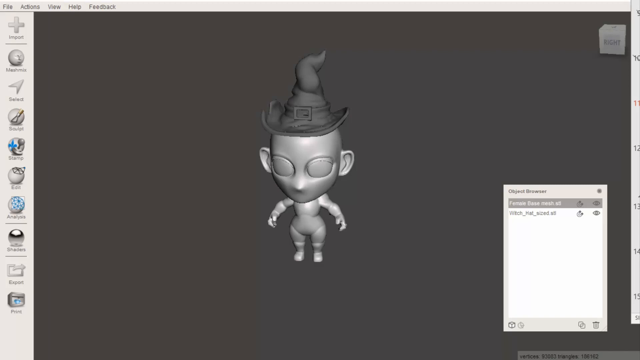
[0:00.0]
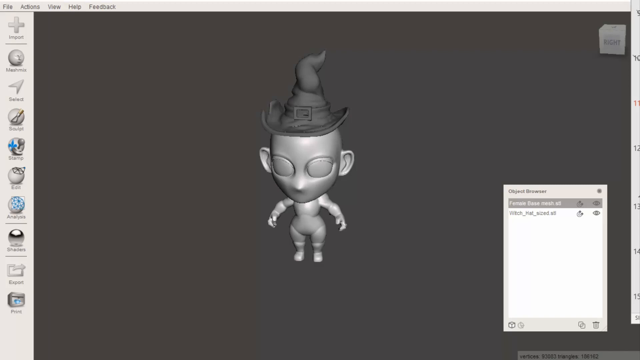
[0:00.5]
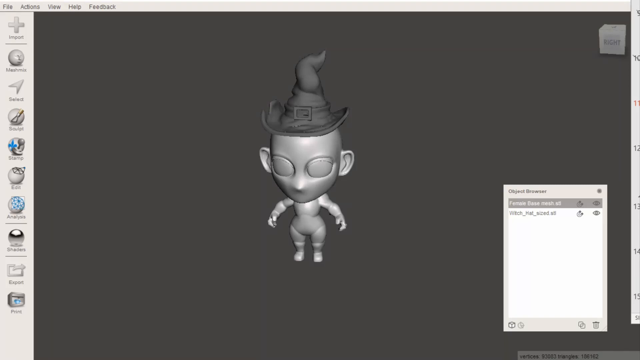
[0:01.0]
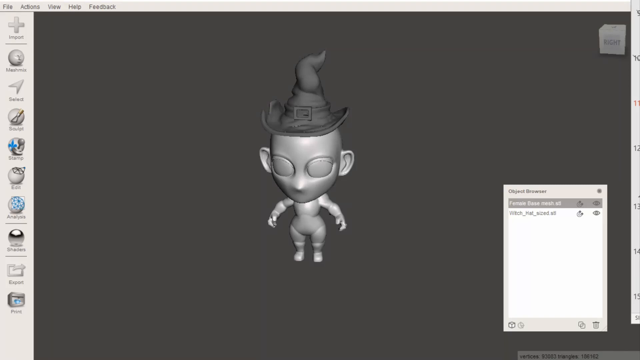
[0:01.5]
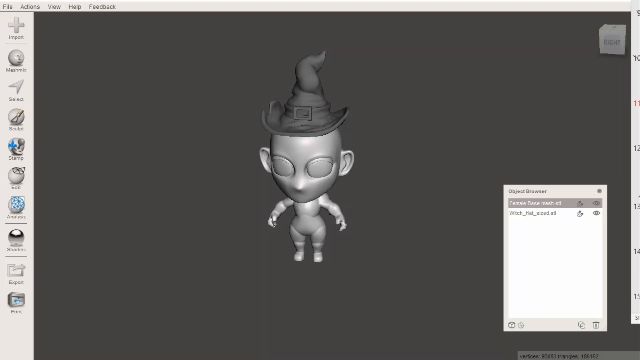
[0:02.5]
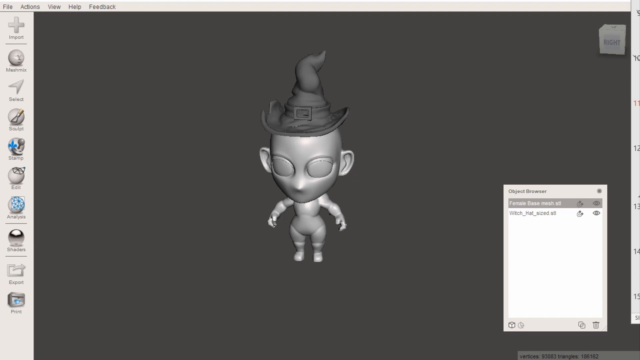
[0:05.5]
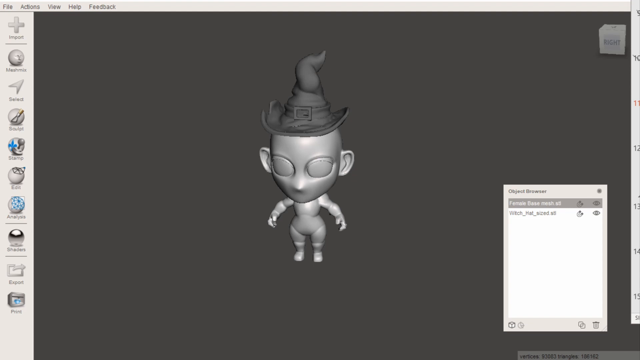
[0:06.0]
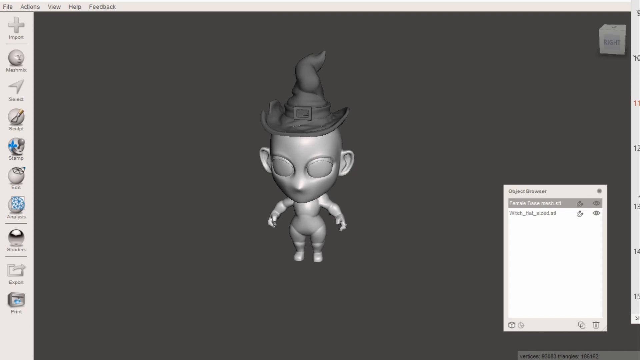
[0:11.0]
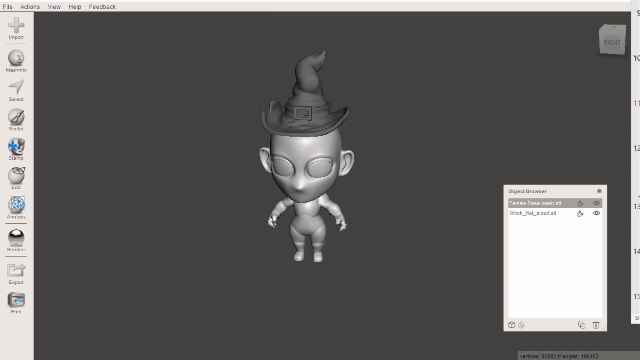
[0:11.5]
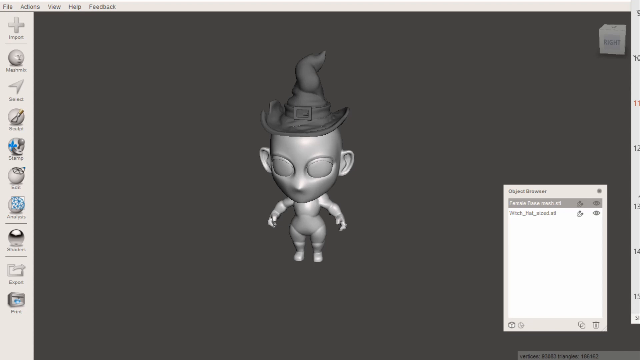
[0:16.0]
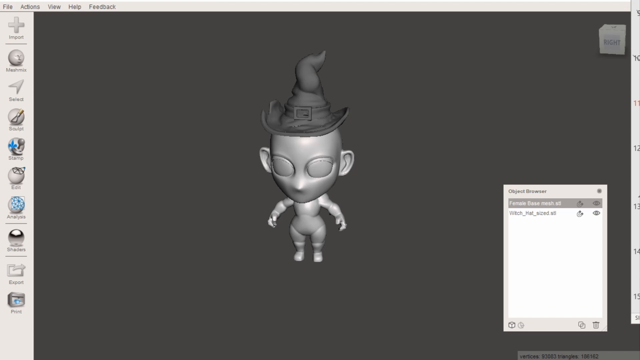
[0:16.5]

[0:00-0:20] A single static image shows what looks like a computer screen running a program for creating animated characters. A toolbar runs across the top, and another bar on the left side holds different features, with icons that can be clicked to run different functions. A text box is open on the screen, but its header is slightly blurry and the text in it is difficult to make out. The screen is gray and white, with no color. In the center is a little animated figure that looks very much like CGI animation. It looks like a baby with a very large head and has no distinct facial features, just large circles for eyes. On its head it wears what looks like a witch's hat, slightly curved at the top, with a big buckle on the front.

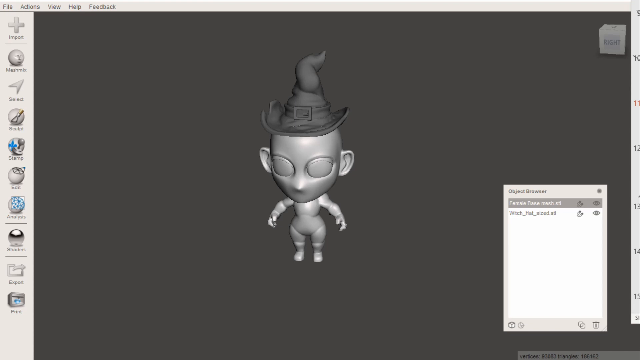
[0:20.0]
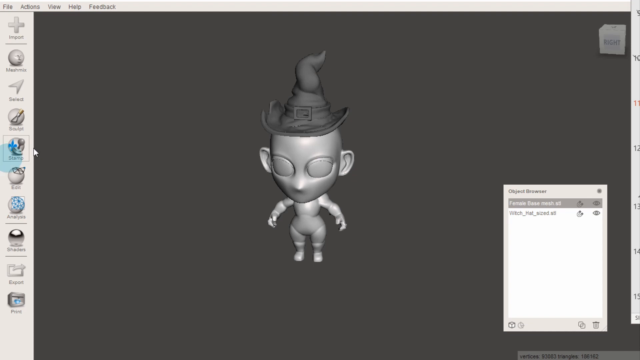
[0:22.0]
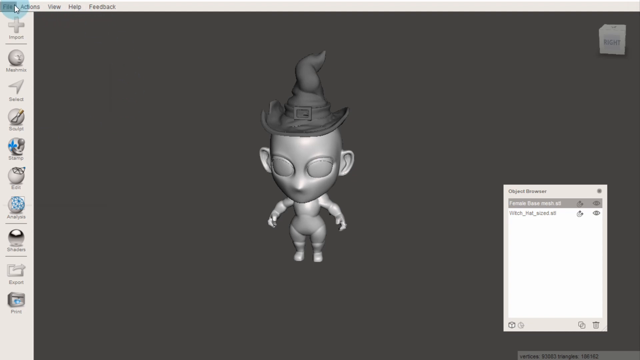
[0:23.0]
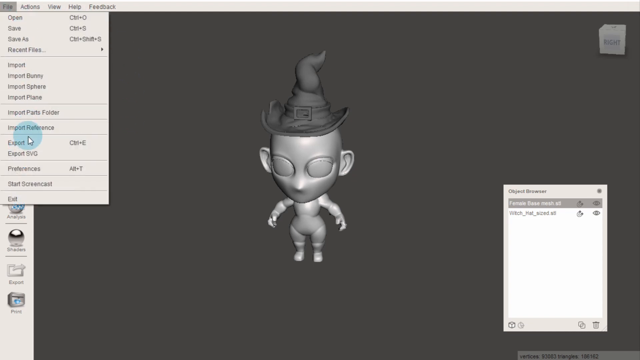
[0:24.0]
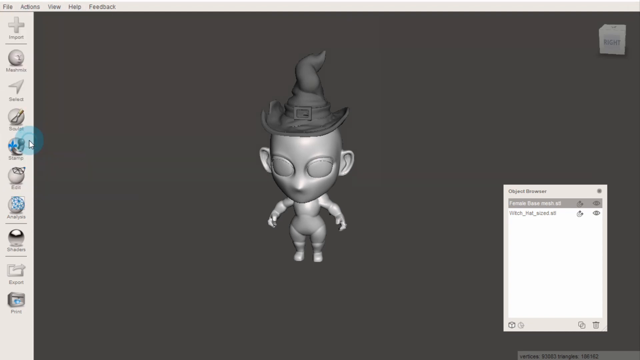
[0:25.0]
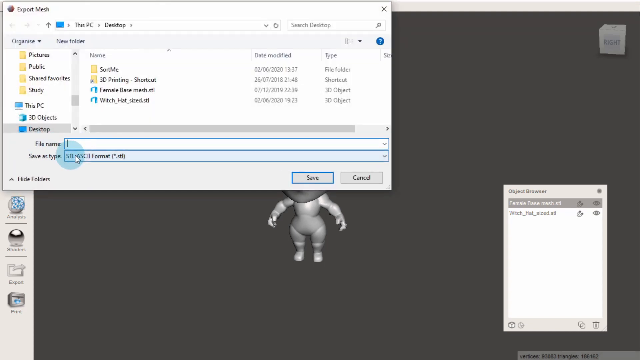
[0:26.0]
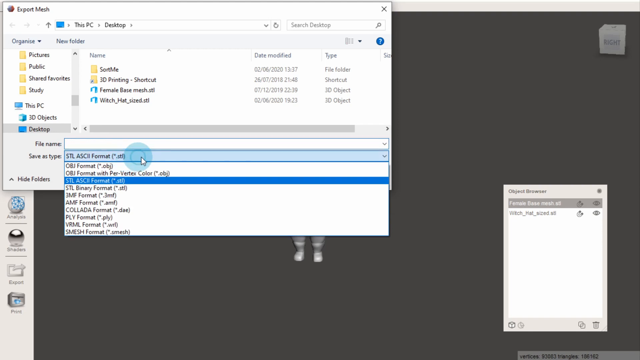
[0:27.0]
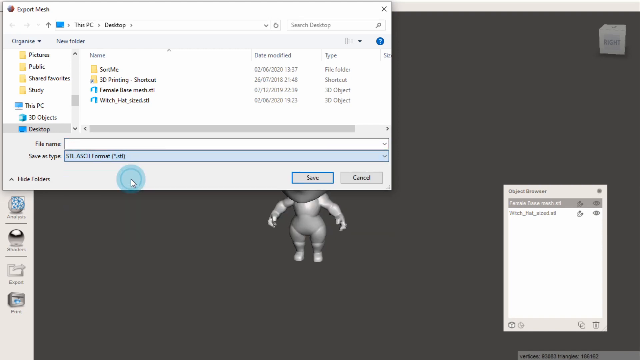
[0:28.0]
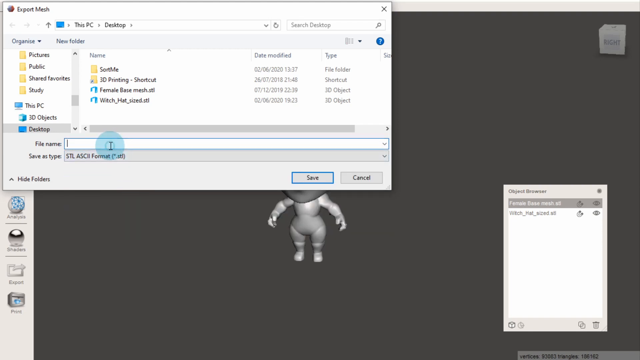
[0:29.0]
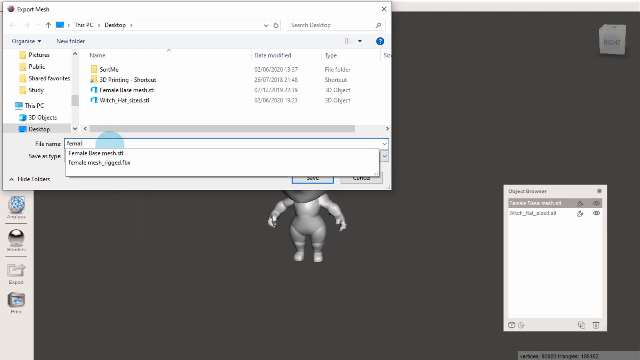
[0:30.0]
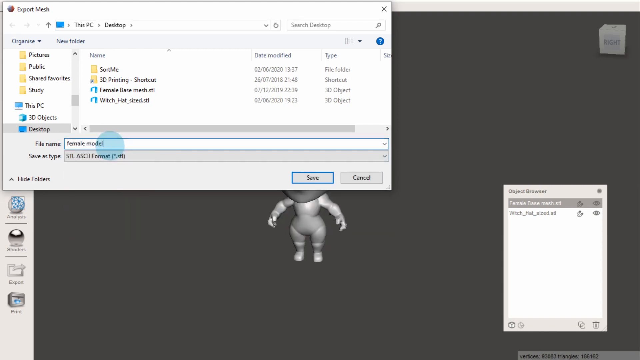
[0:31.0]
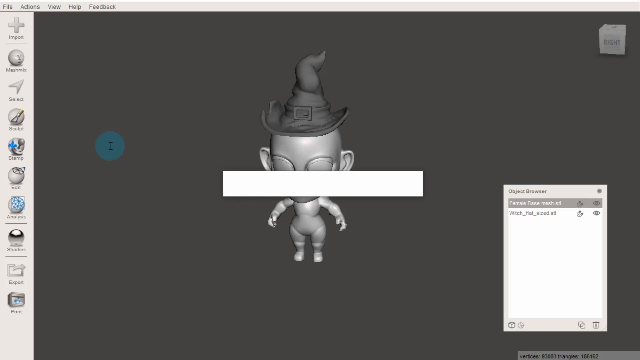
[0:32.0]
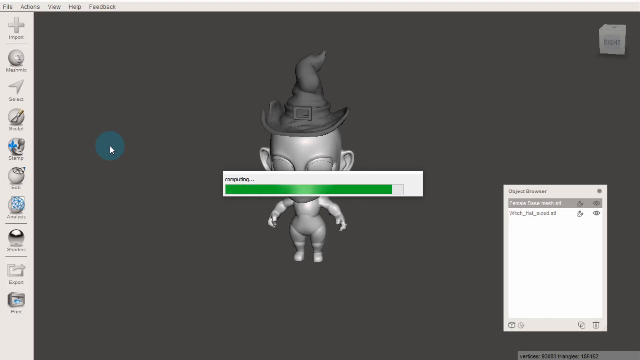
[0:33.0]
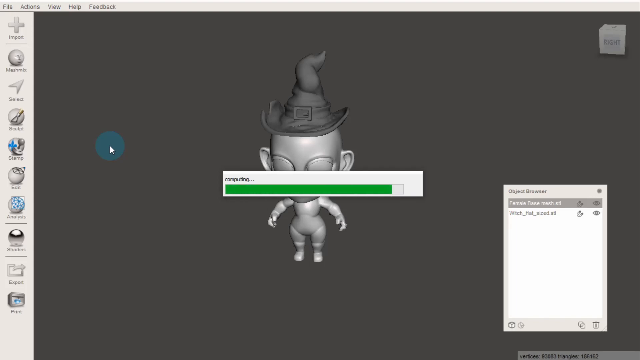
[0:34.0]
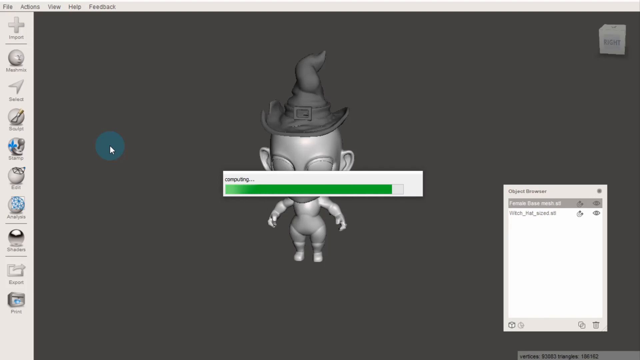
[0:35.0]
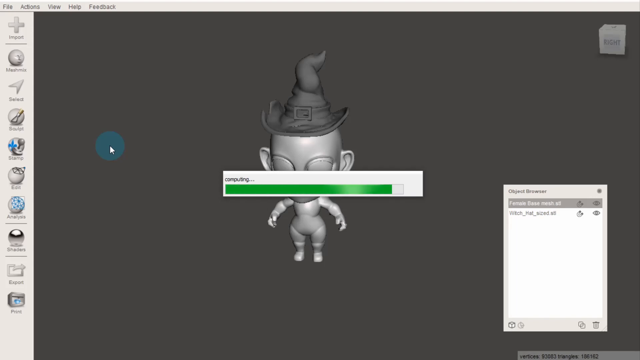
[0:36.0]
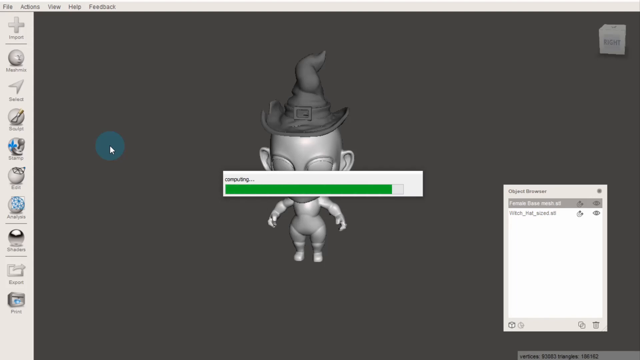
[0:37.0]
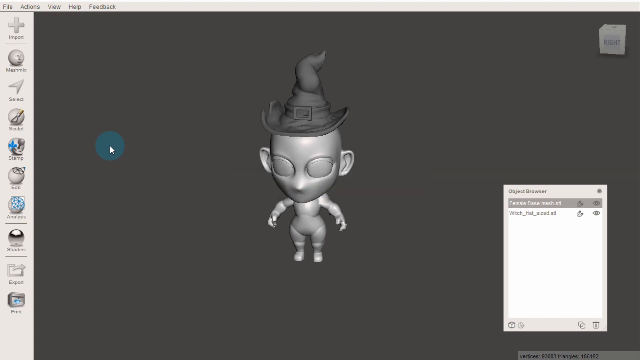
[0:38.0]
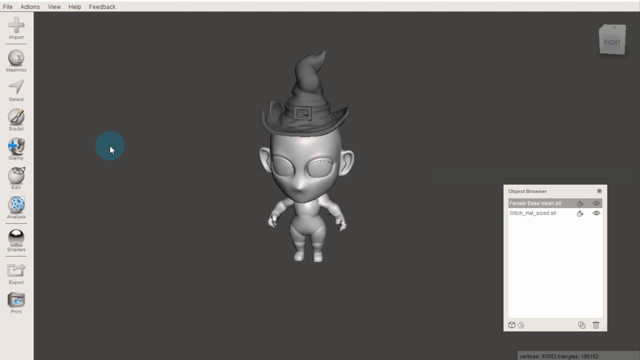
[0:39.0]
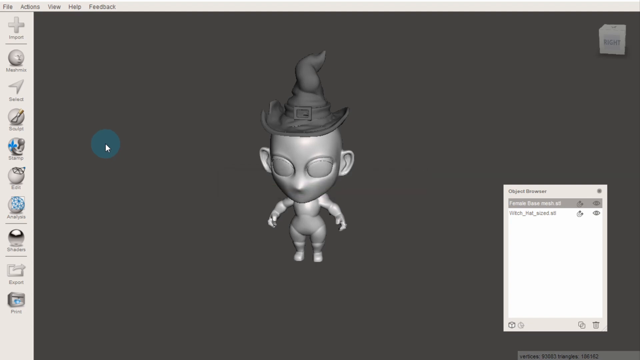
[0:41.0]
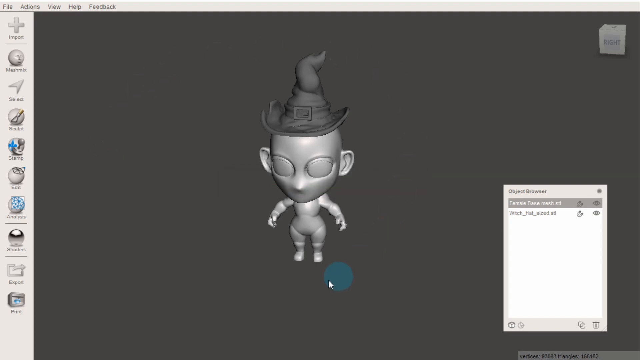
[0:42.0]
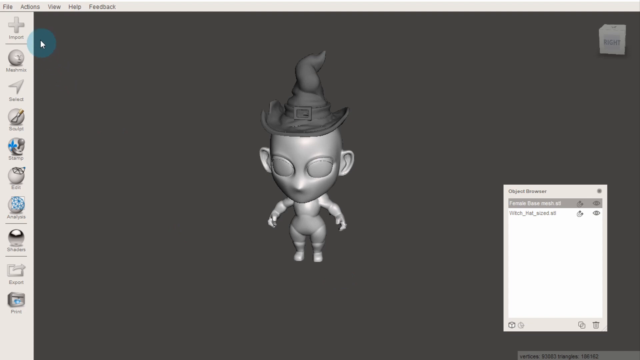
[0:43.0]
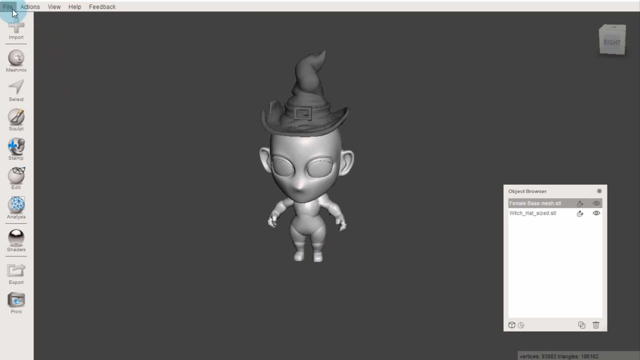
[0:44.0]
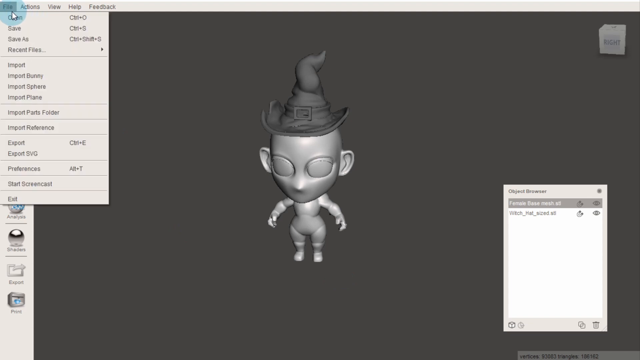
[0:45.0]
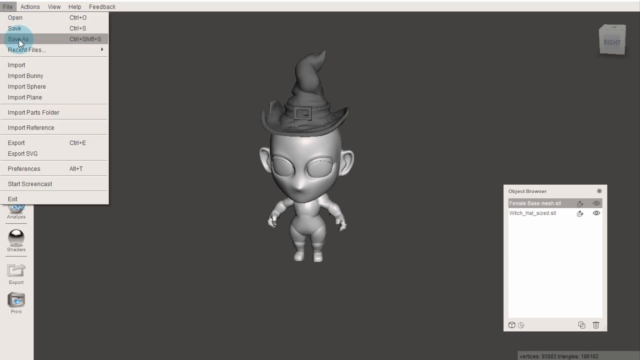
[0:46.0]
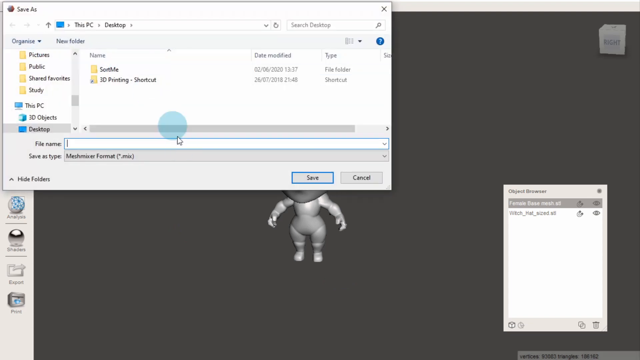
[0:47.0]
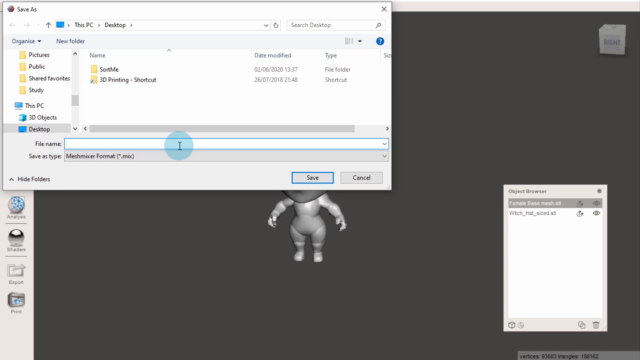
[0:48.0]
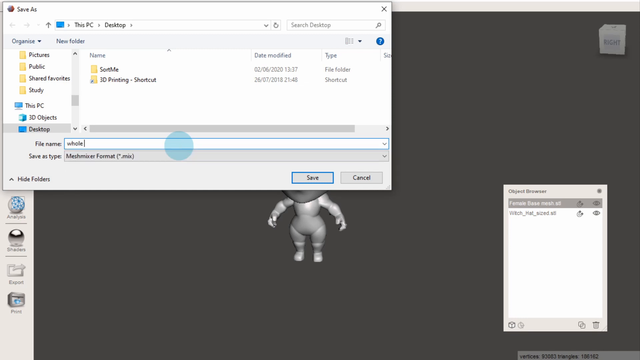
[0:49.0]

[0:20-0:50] Someone uses a computer program that creates animation. The gray and white display shows a small animated character that looks like a baby with a large head, wearing what looks like a witch's hat that is conical and curved at the top. A text box is open on the right side, but it is slightly blurry. The cursor highlights the "File" button in the navigation bar and a drop-down menu appears. The user scrolls down and clicks "Export", and "Export Mesh" appears as the header of a large white box. The cursor clicks "Save As Type", another drop-down menu appears, and the user clicks the third choice from the top, then types a file name in the bar above it: "Female Model". A bar appears across the middle of the screen and gradually fills with green, with "Computing" above it, until the green reaches the right side and the box disappears. The cursor moves around the screen, clicks the "File" button again, and then clicks the "Save As" choice. The "Save As" box appears, and the user types "Whole Project" in the "File Name" box.